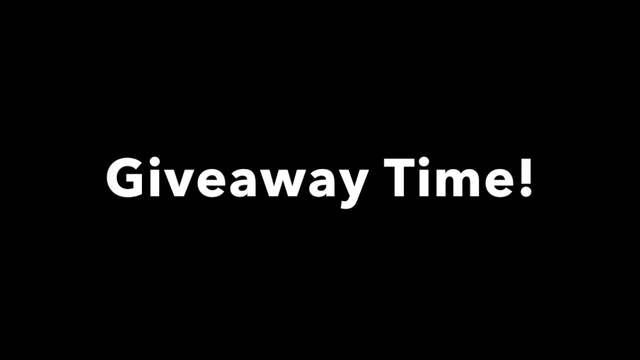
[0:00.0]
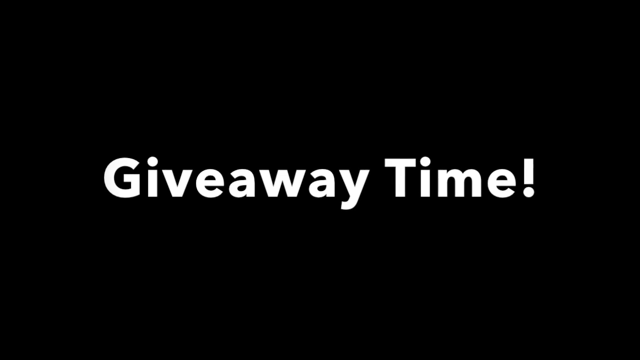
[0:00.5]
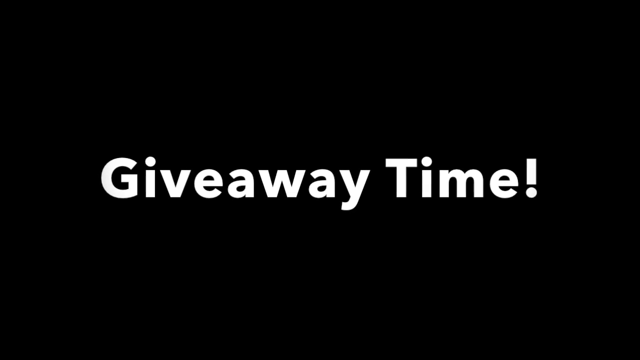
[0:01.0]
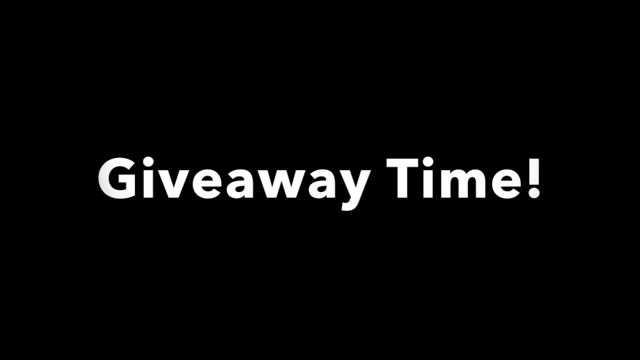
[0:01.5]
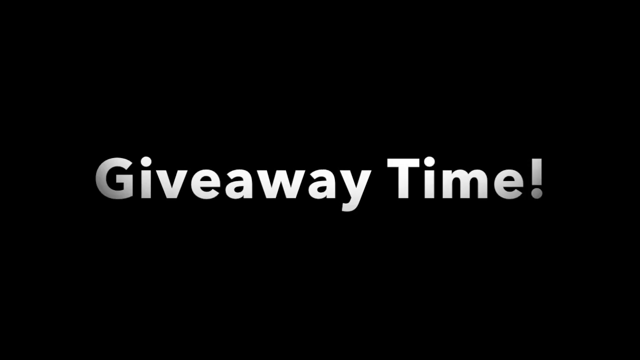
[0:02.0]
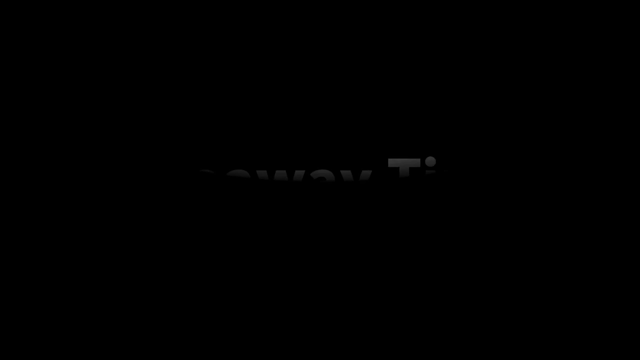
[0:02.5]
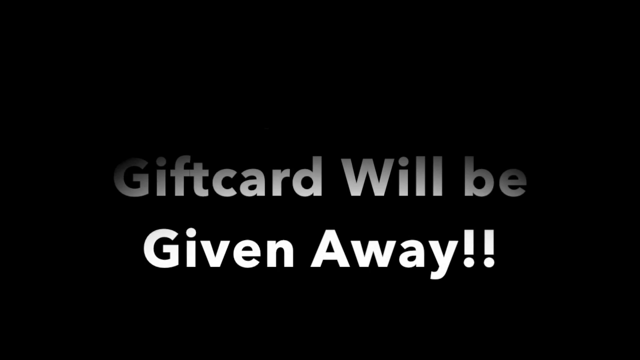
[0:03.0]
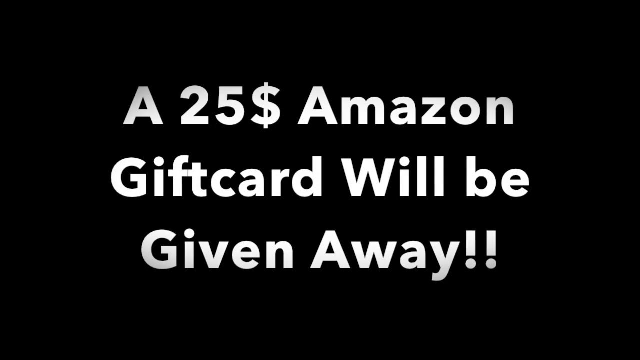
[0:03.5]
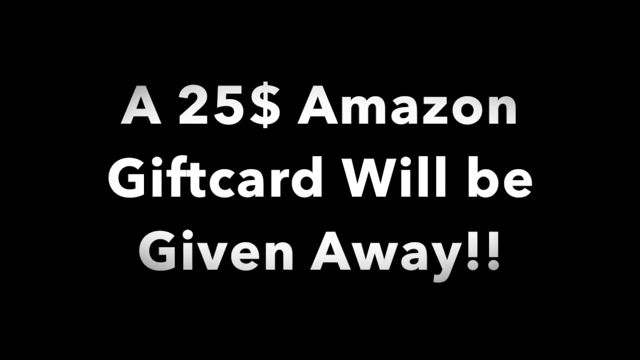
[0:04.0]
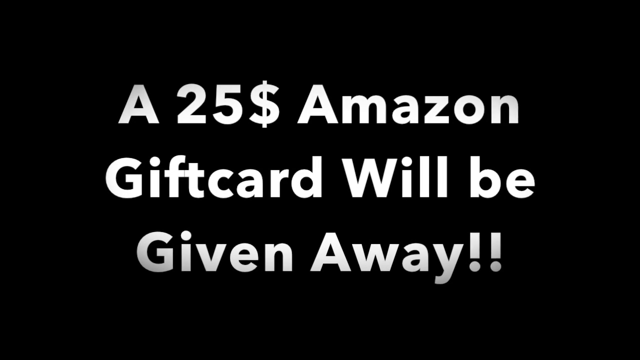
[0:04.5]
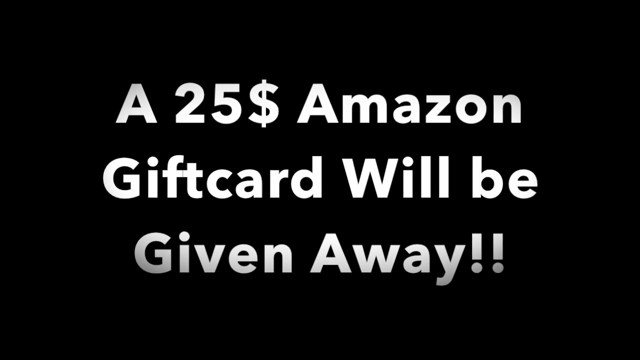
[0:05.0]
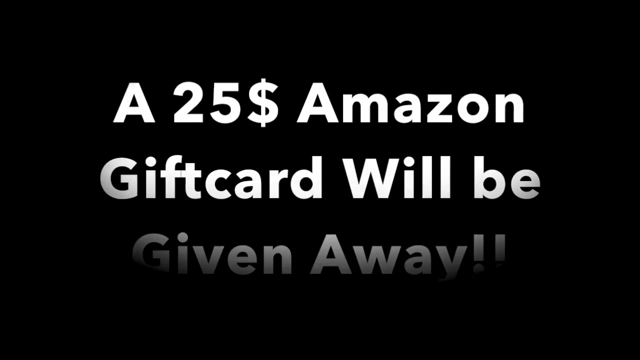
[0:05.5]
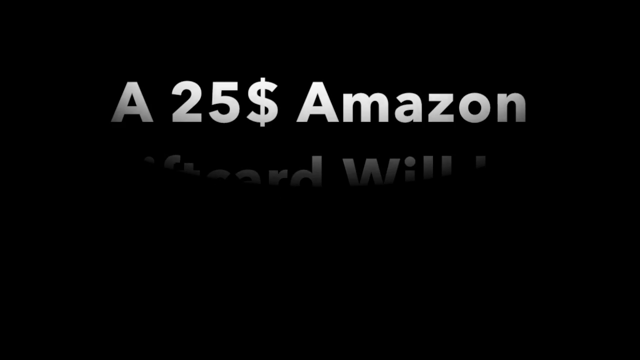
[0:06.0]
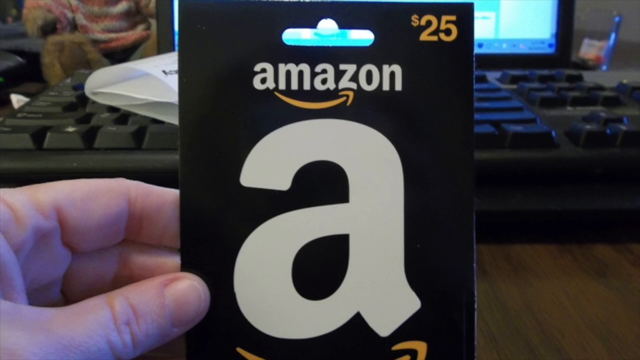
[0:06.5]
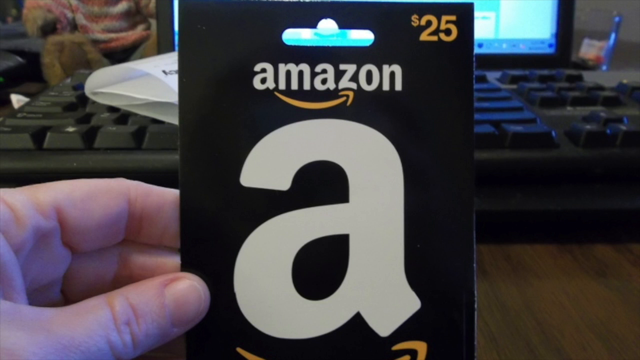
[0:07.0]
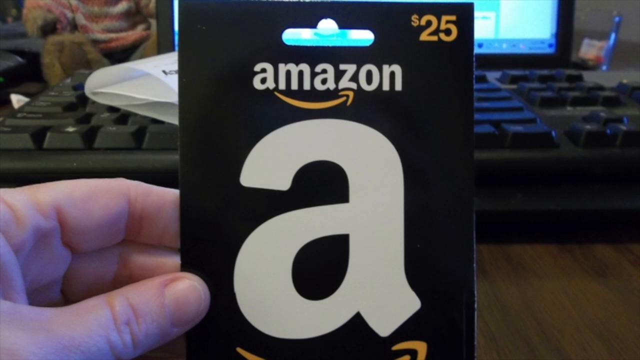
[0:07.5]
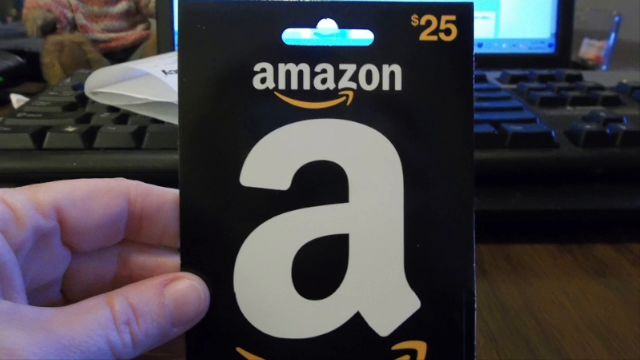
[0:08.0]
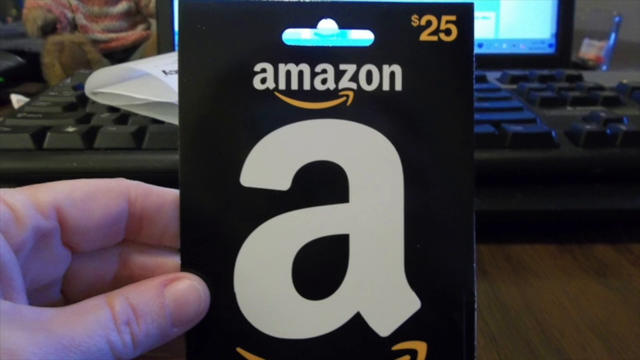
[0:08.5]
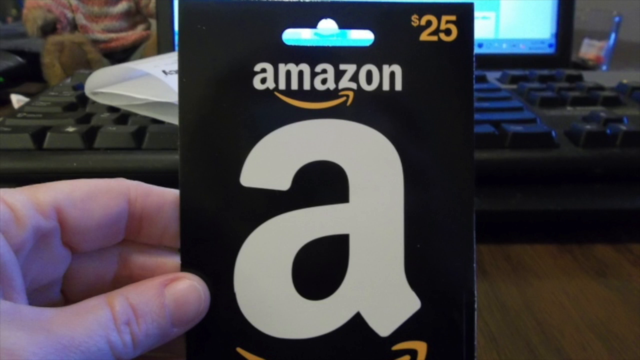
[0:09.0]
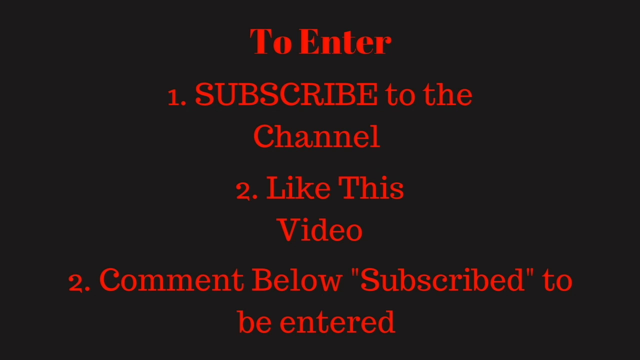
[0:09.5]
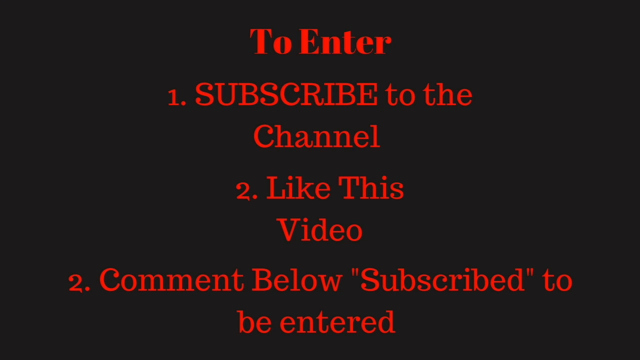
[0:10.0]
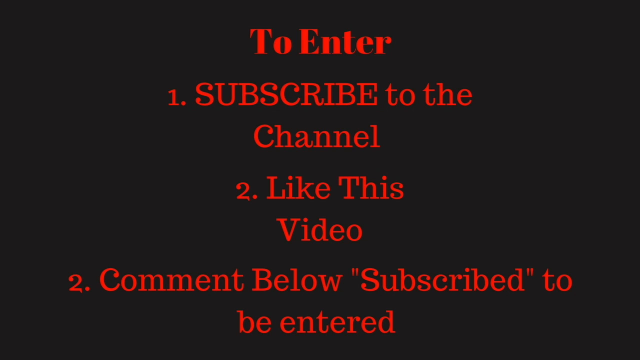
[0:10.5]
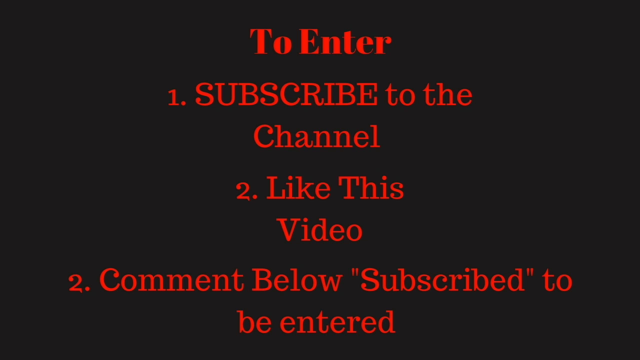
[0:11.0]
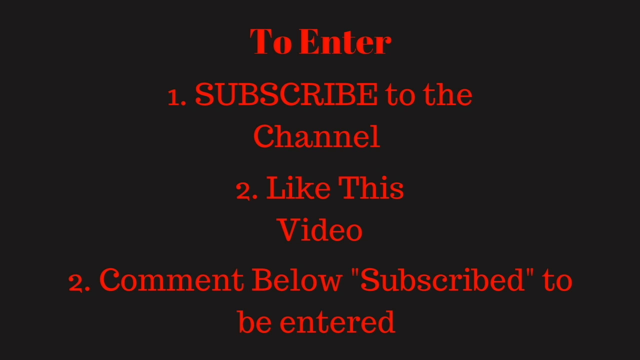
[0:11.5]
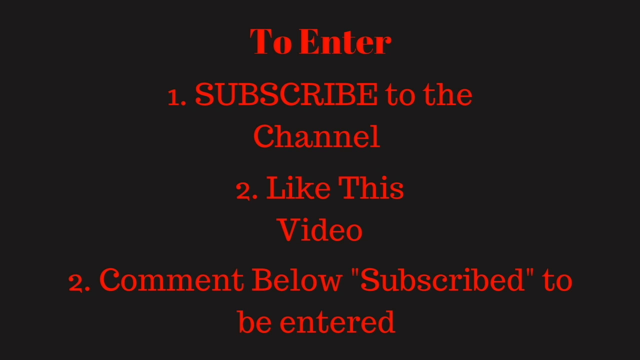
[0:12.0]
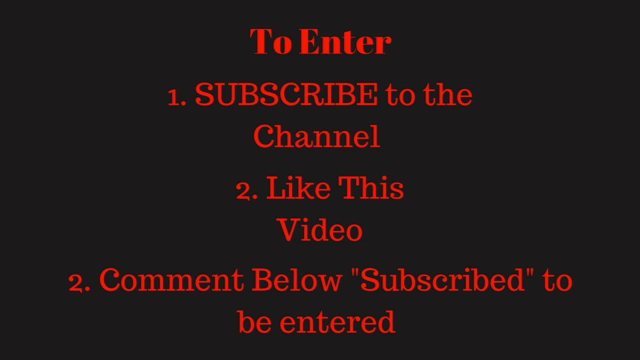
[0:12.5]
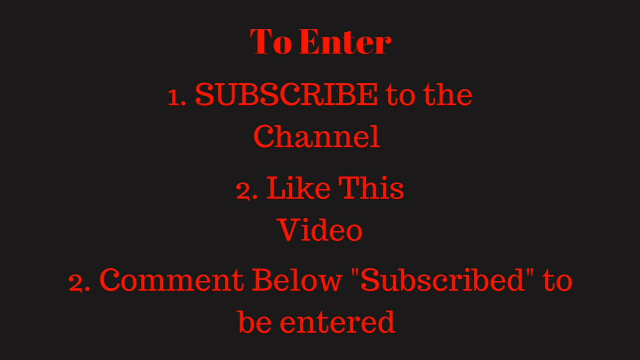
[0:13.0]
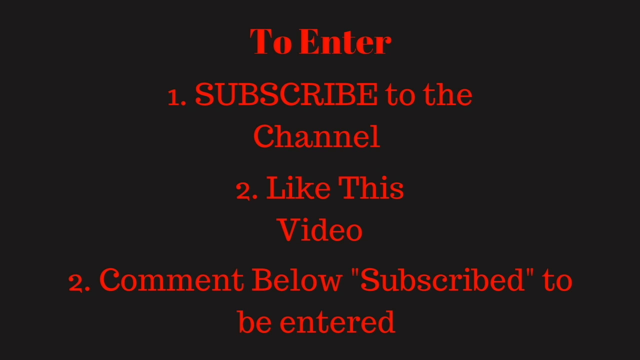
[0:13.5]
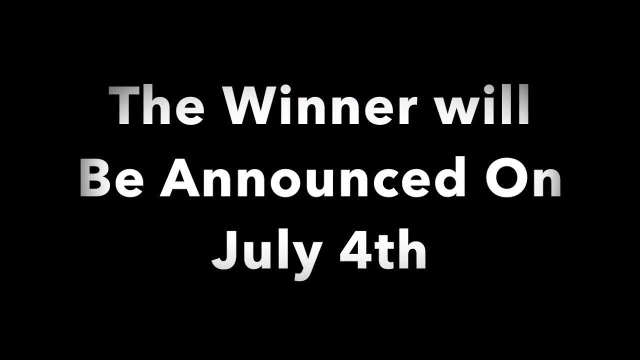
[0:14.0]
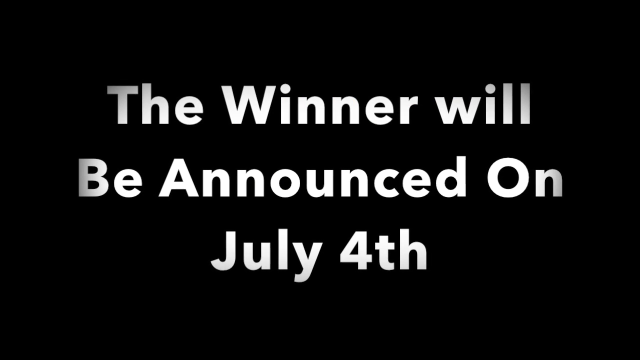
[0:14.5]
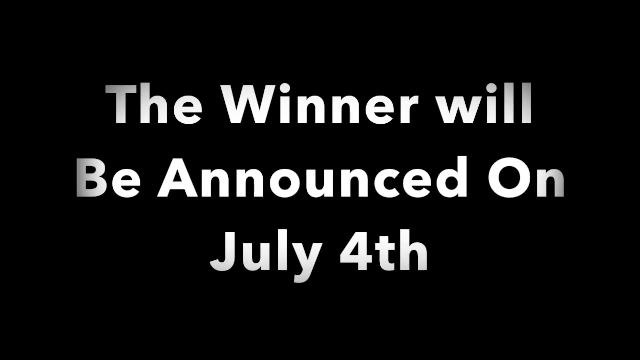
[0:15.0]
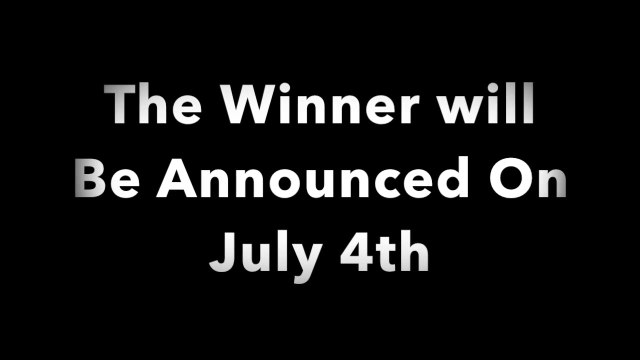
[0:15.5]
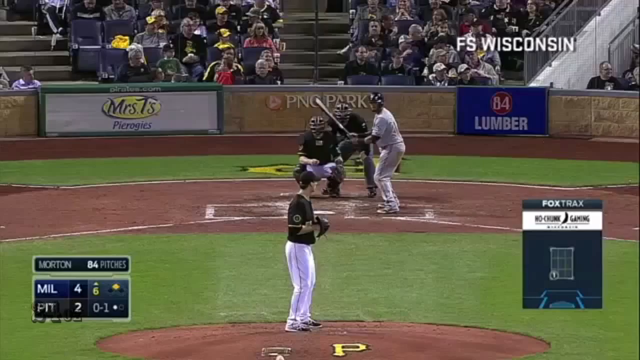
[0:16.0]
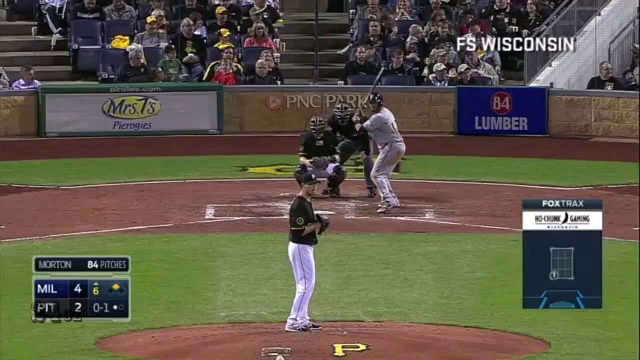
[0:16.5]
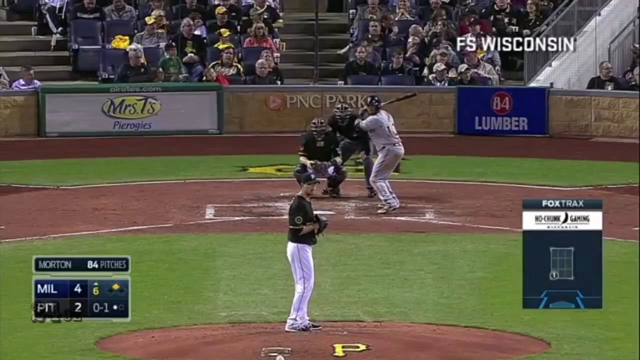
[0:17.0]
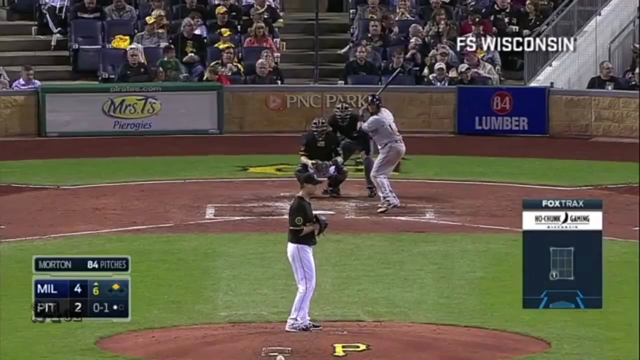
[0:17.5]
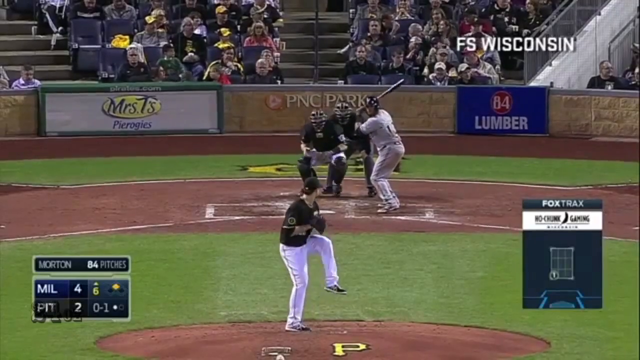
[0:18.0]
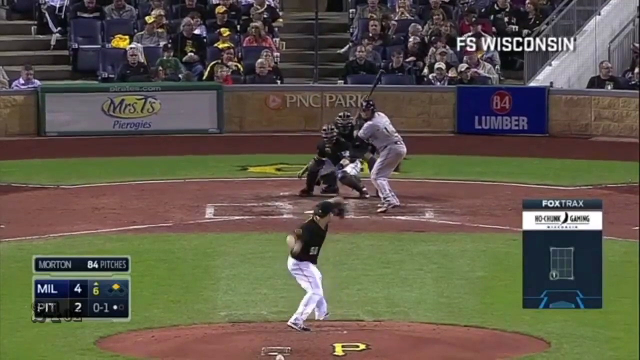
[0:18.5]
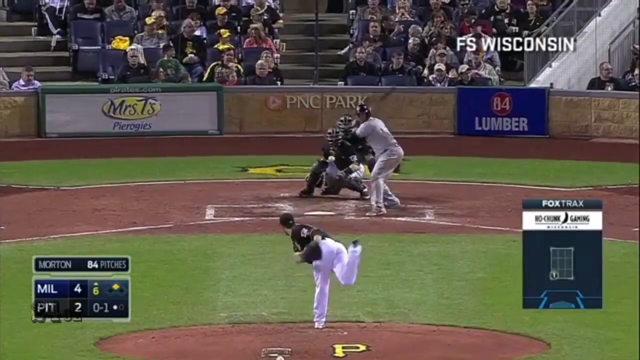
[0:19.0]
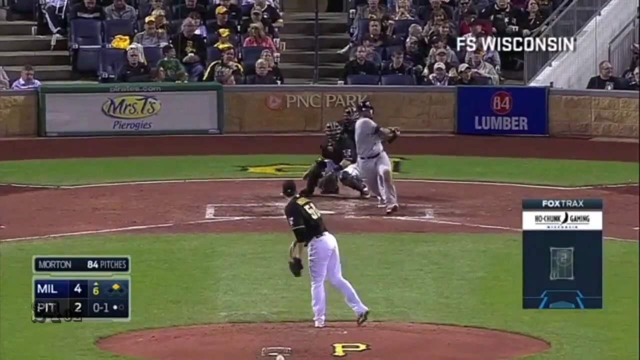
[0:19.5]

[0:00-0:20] Inside a baseball stadium, a right-handed pitcher looks to the catcher. The batter stands at home plate holding a bat in both hands, with the catcher and an umpire behind home plate. The catcher, batter and pitcher all seem thin in stature, while the umpire is a bit heavier. Quite a few spectators sit behind the action, and most seats are full. The batter hits the ball and takes off to first base.